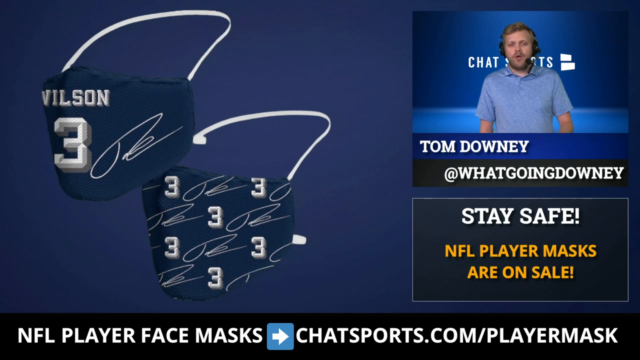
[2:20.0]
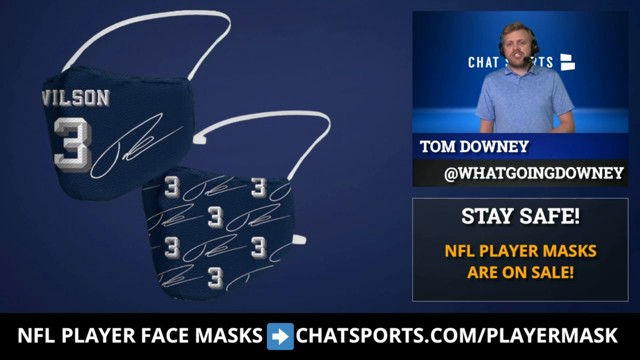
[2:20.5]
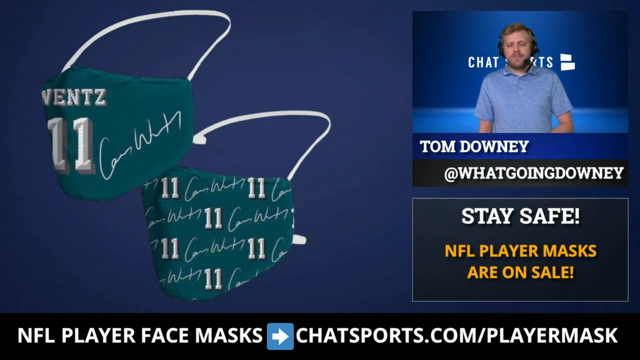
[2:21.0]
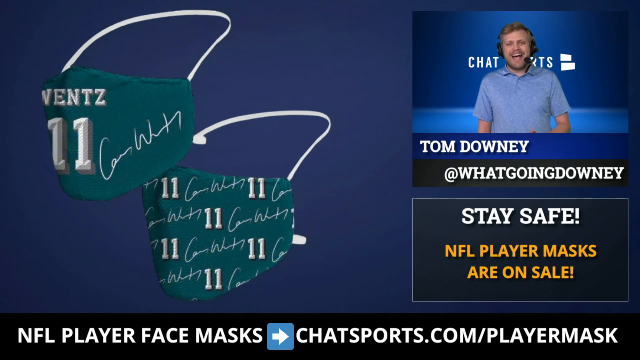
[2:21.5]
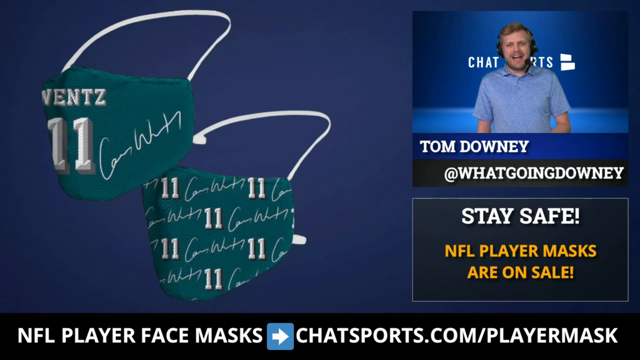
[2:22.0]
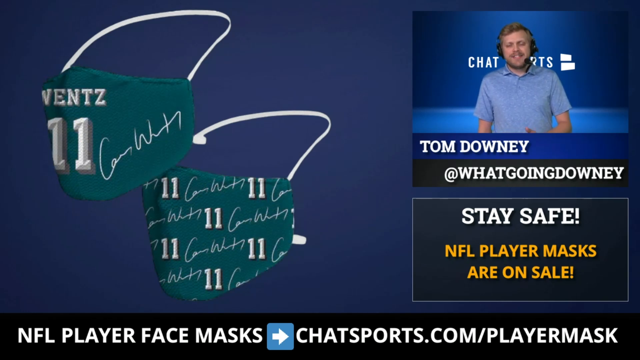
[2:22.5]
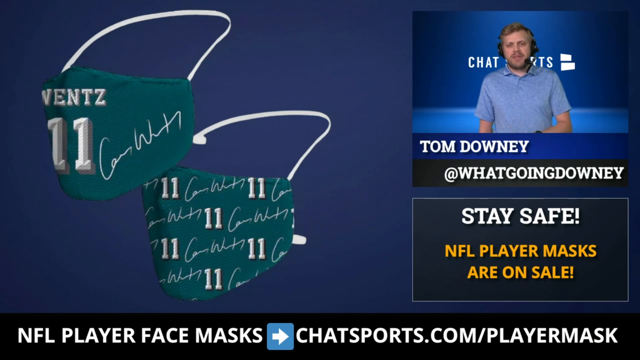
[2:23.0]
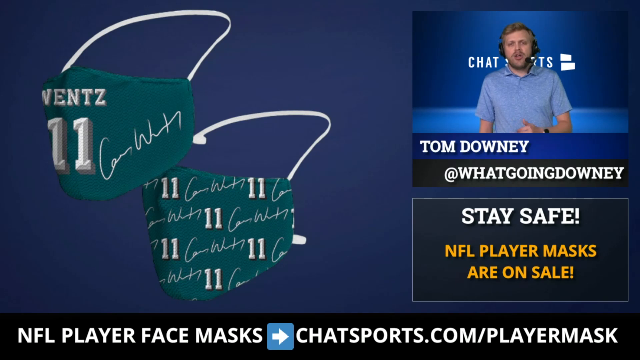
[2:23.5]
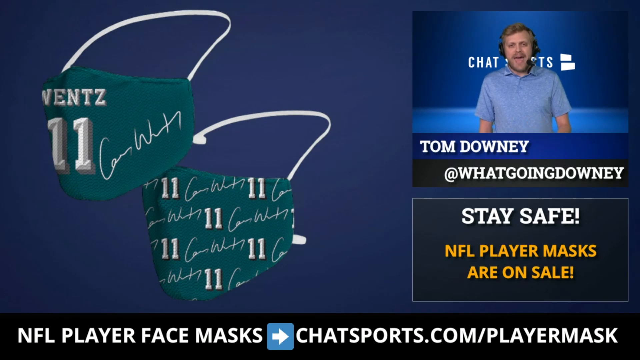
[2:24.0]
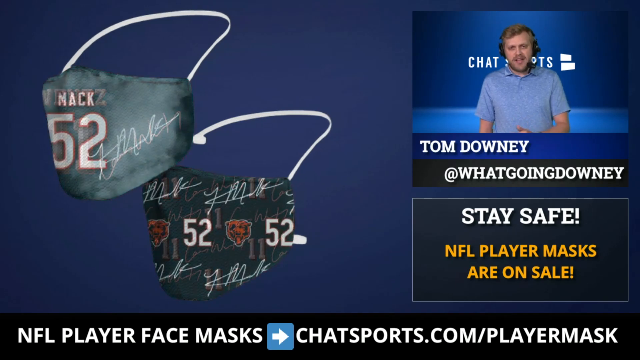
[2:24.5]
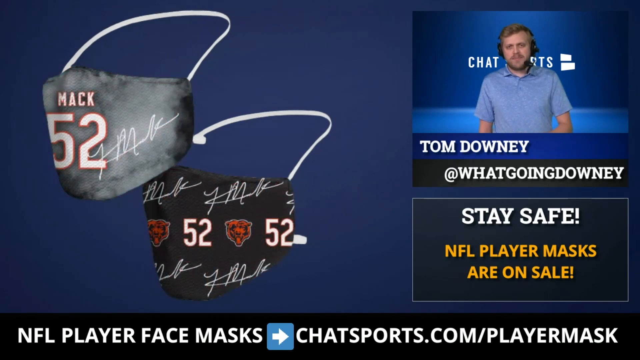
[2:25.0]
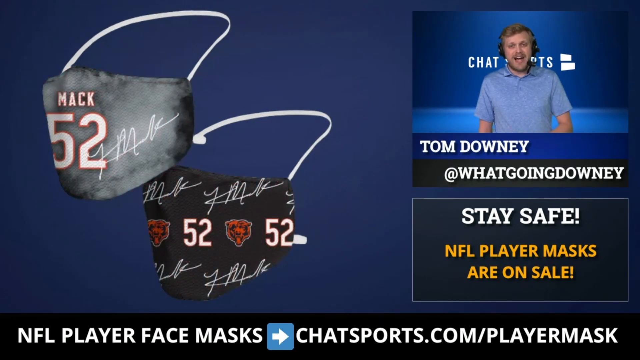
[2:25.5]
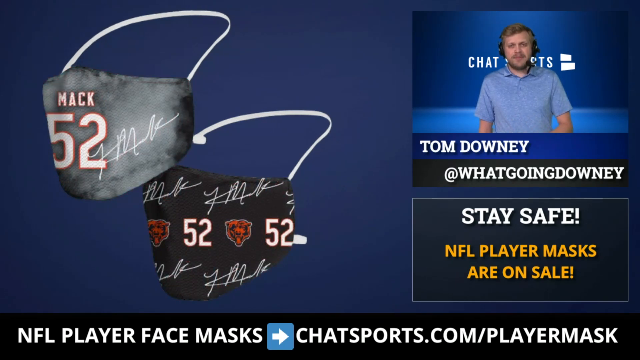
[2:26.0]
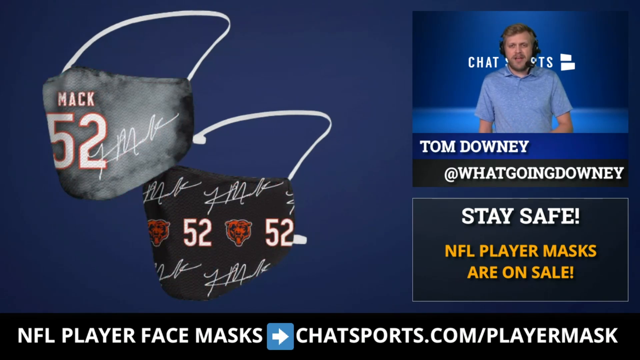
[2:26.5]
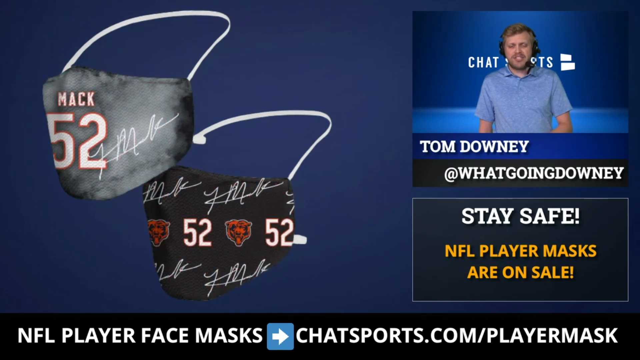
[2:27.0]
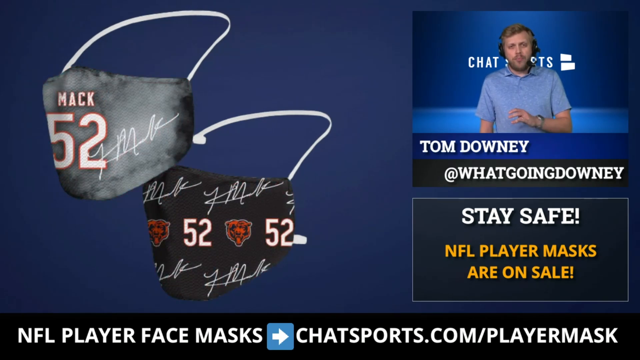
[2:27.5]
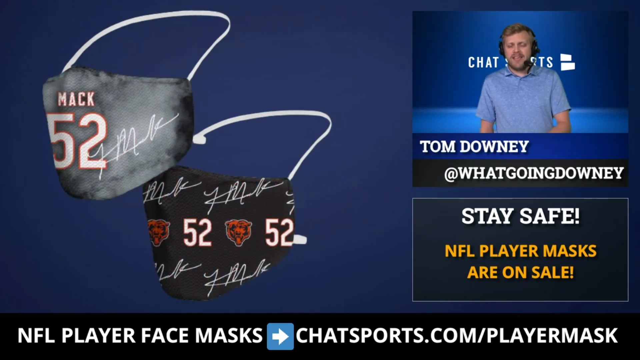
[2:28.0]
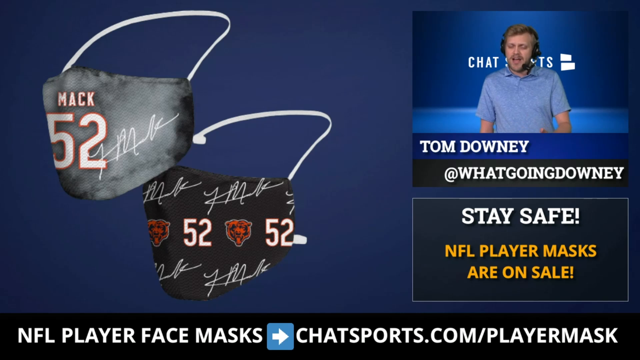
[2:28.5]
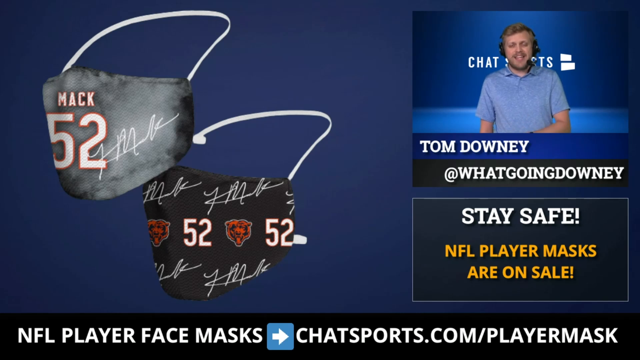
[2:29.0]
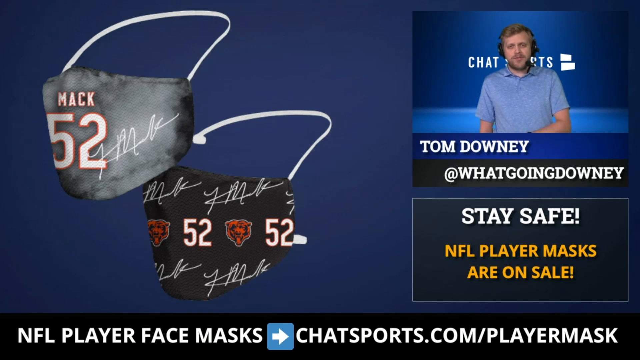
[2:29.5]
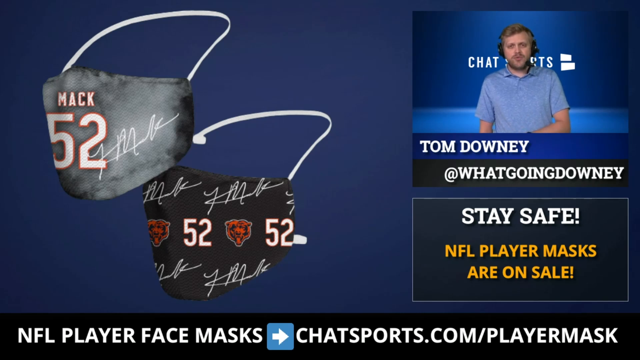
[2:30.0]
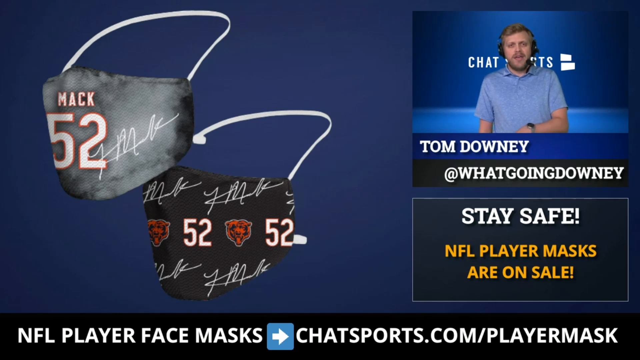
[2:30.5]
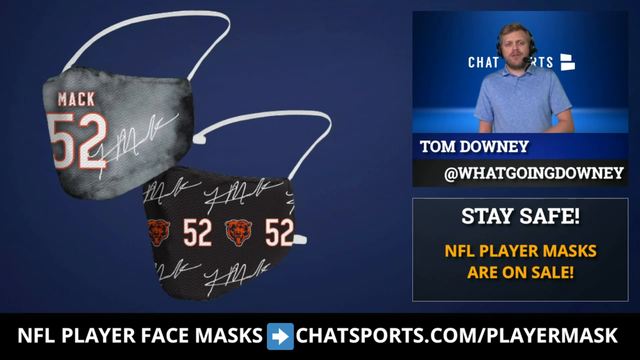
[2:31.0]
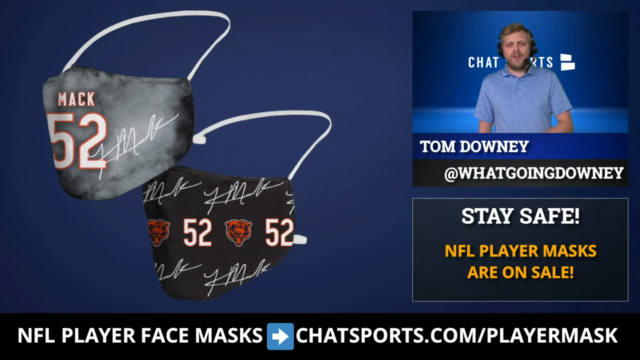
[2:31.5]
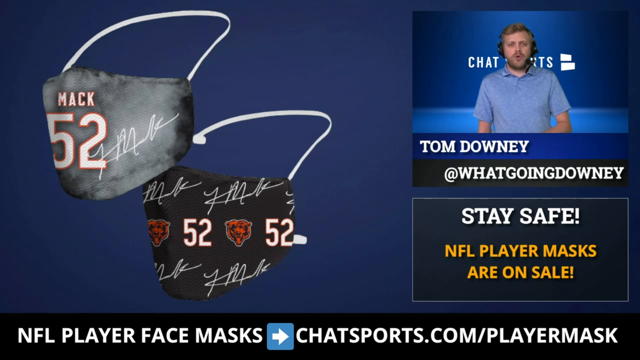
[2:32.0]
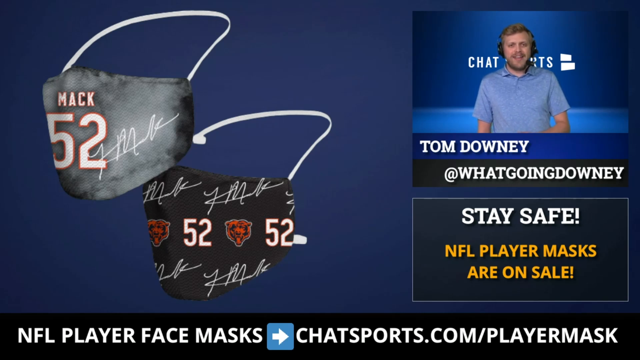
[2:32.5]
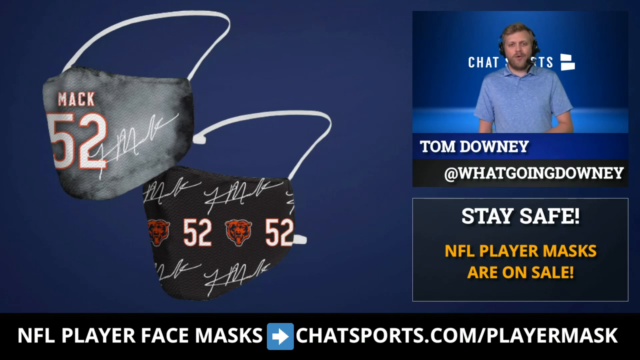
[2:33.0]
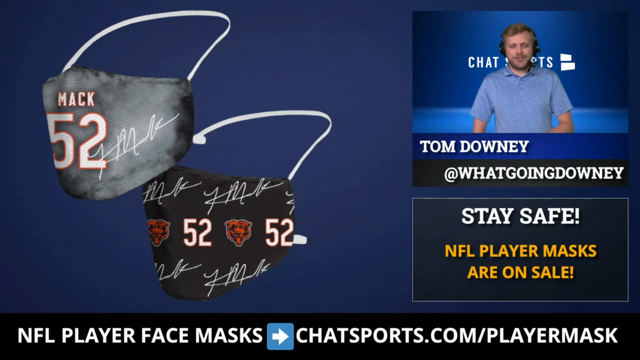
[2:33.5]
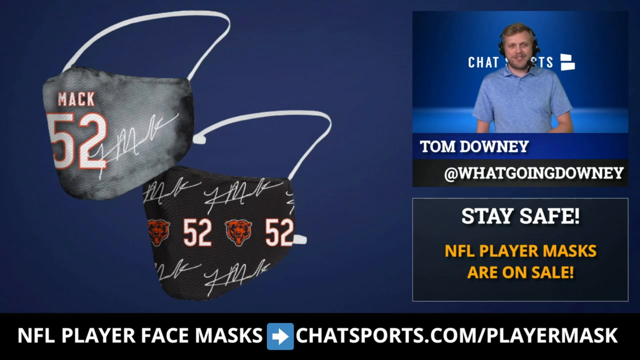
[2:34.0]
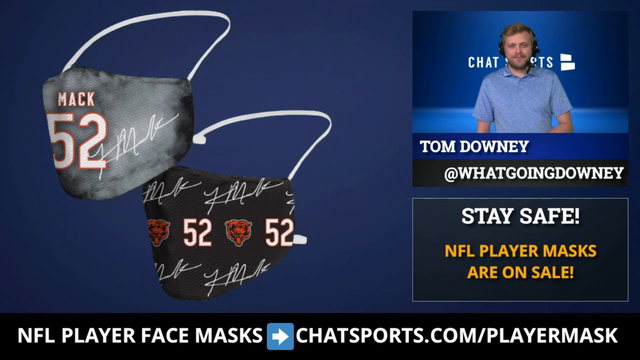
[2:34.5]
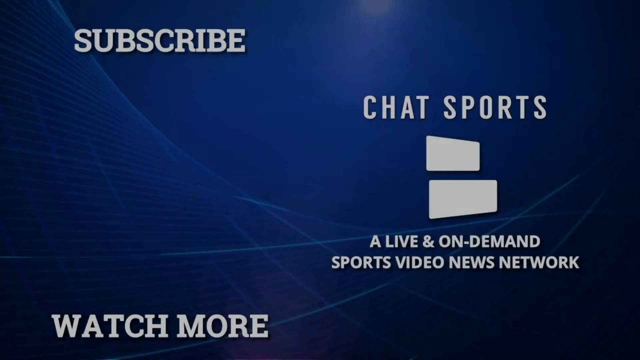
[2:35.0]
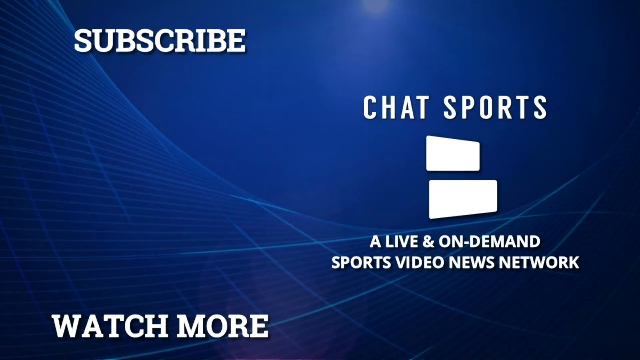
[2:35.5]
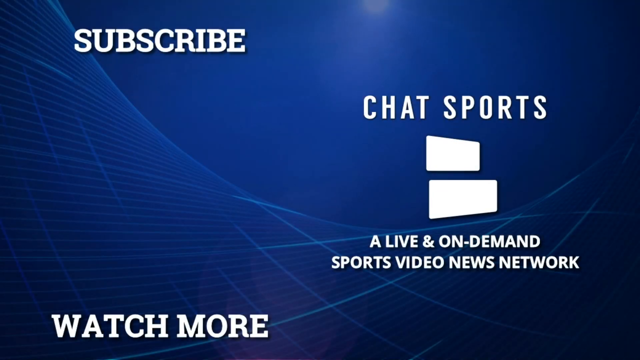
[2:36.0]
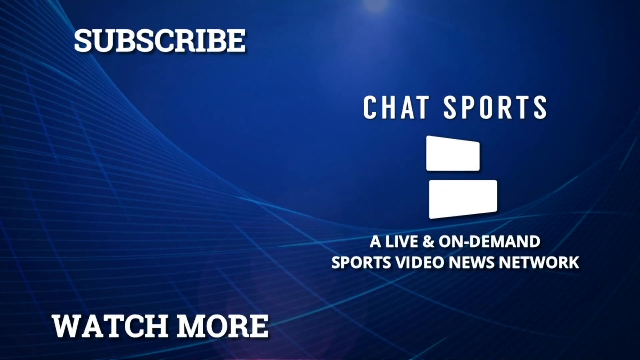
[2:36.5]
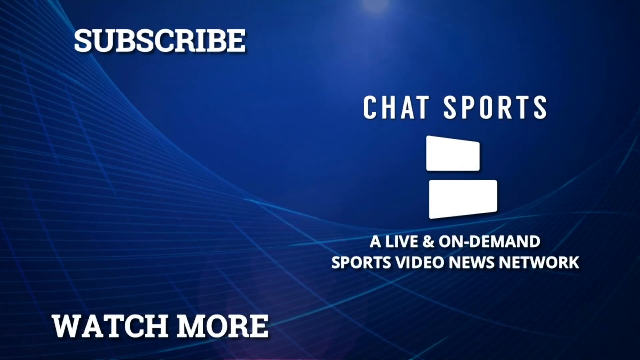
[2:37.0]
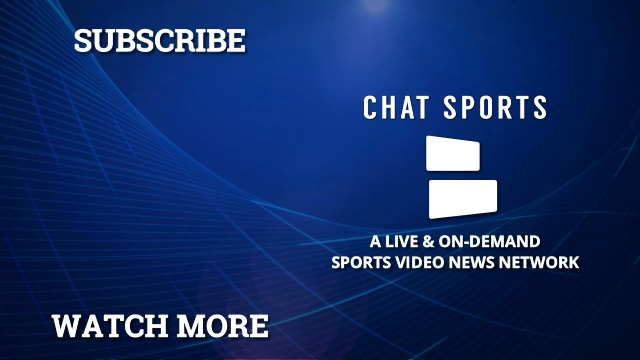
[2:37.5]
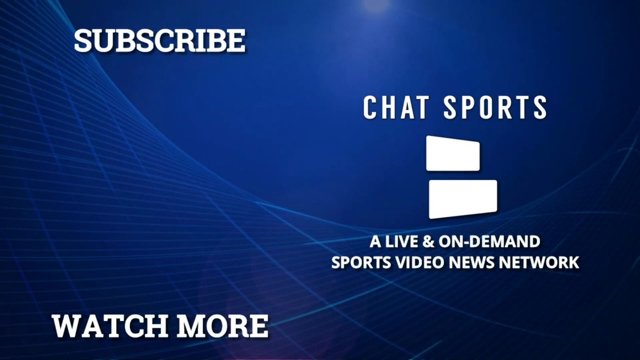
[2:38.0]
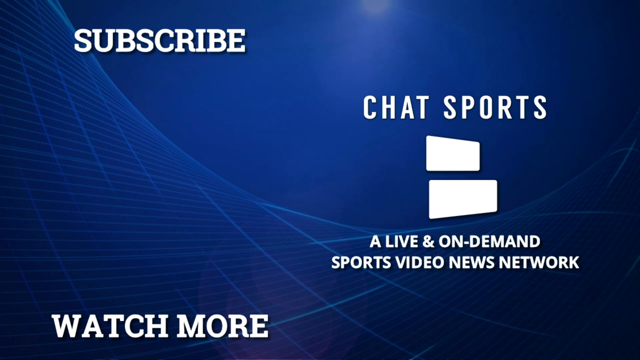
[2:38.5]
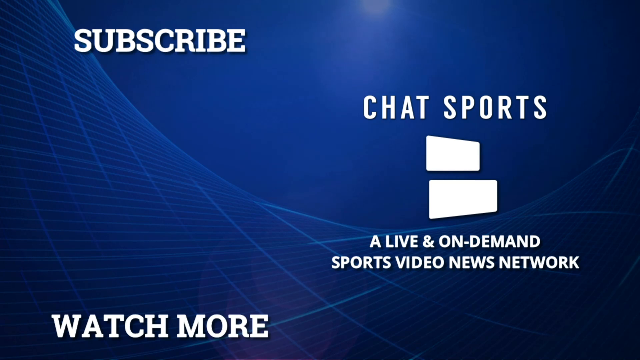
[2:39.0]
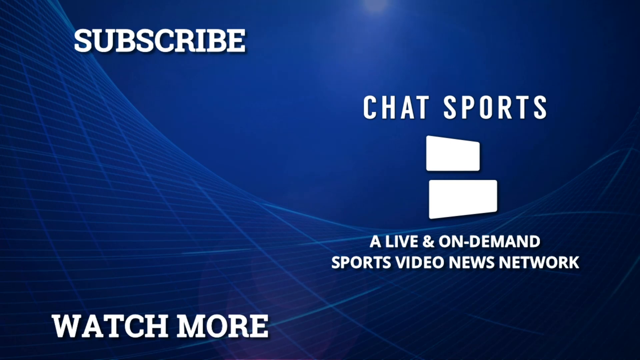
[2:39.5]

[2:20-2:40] NFL player masks are shown for sale; a box in the lower right reads "stay safe" in white and "NFL player masks are on sale". Two bluish-green examples are shown, then a gray one and a black one, with players' names and team numbers on them. "Subscribe" appears on a blue background in the upper left corner, and "watch more" appears at the bottom, along with "a live and on-demand sports video news network" and "Chat Sports". The Chat Sports sign is behind Tom Downey, who talks live in front of it, so only the word "chat" is visible there.